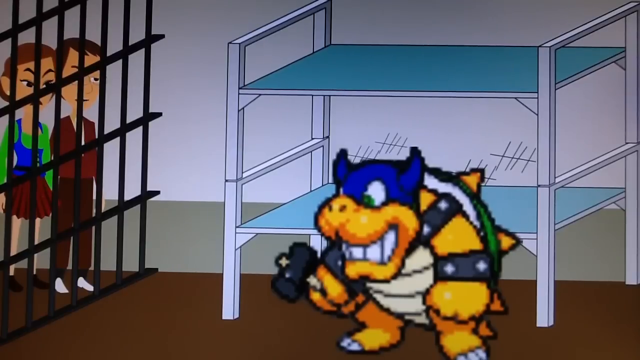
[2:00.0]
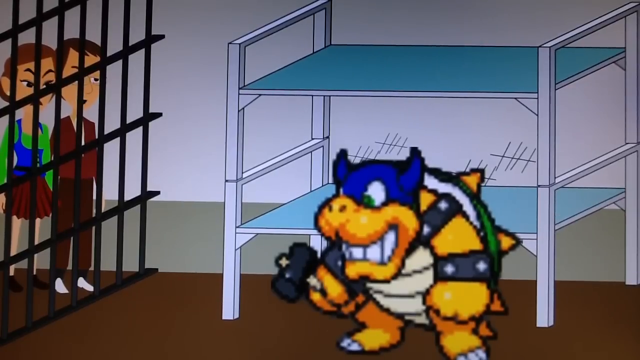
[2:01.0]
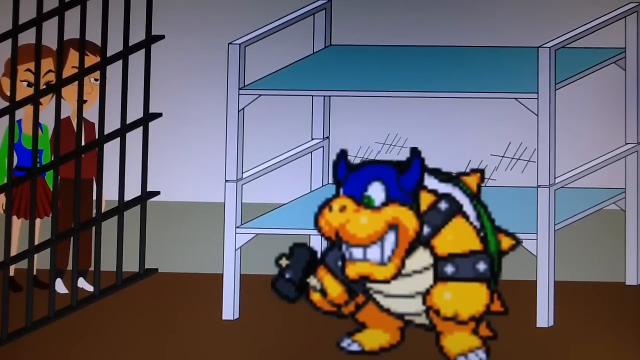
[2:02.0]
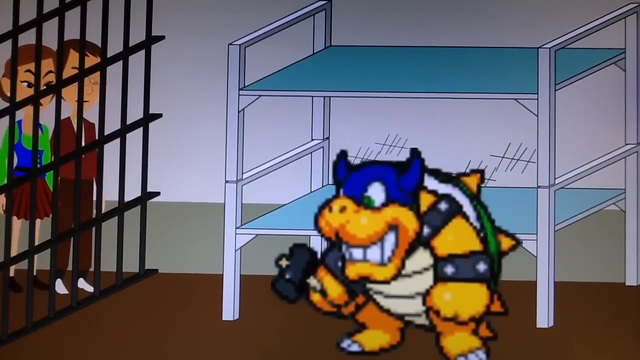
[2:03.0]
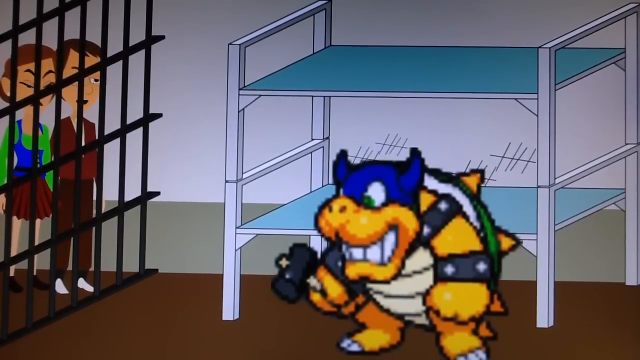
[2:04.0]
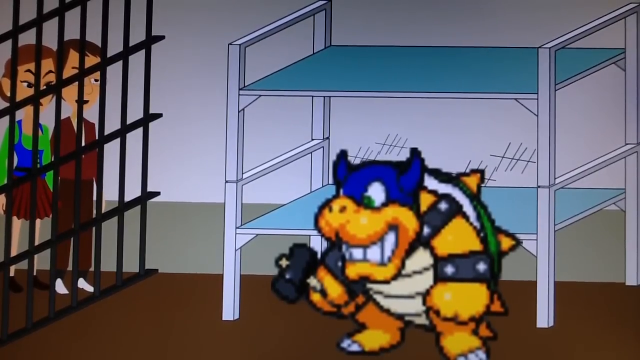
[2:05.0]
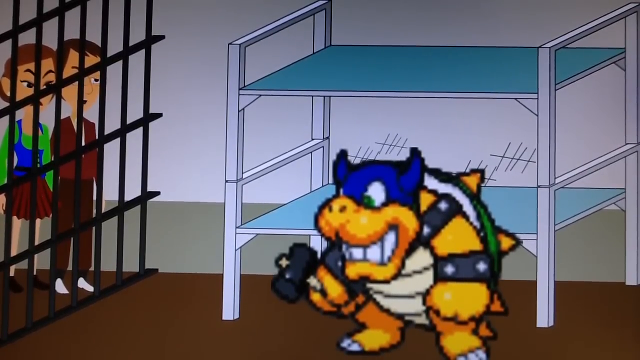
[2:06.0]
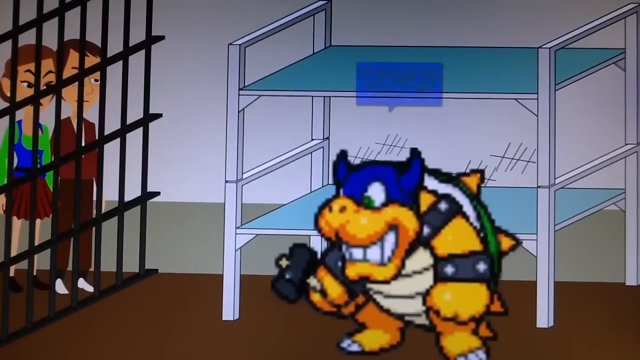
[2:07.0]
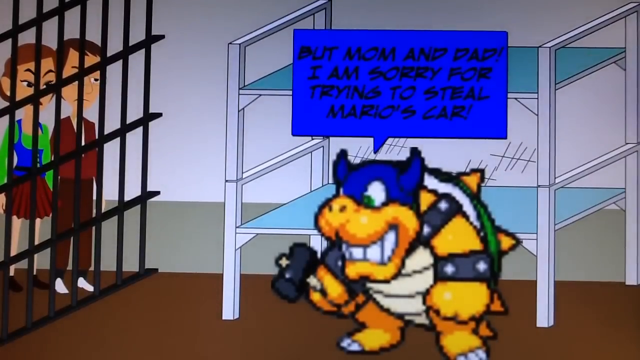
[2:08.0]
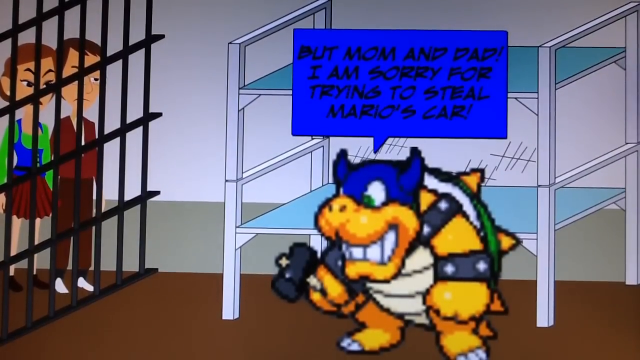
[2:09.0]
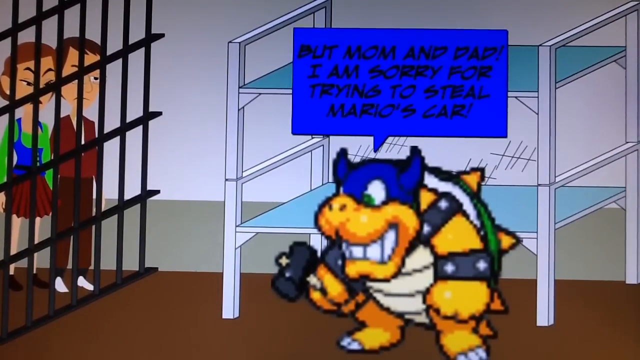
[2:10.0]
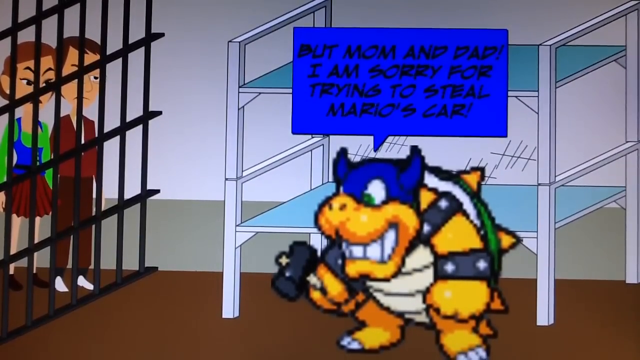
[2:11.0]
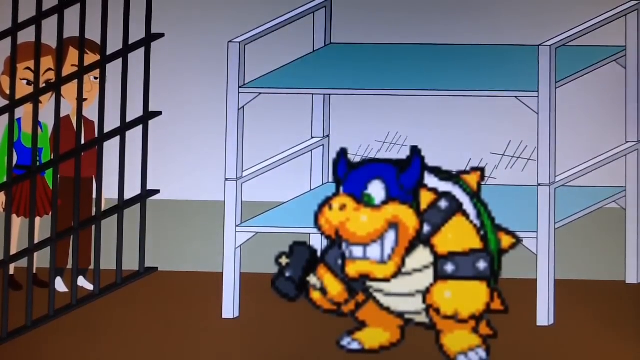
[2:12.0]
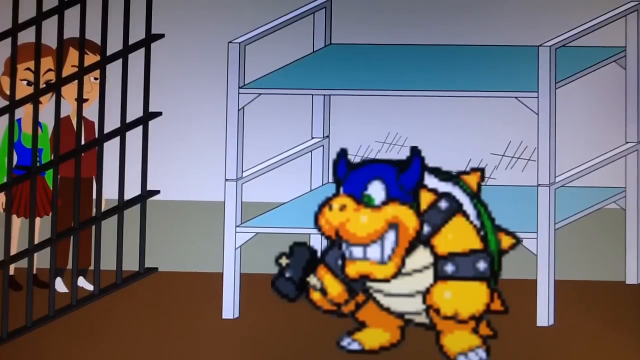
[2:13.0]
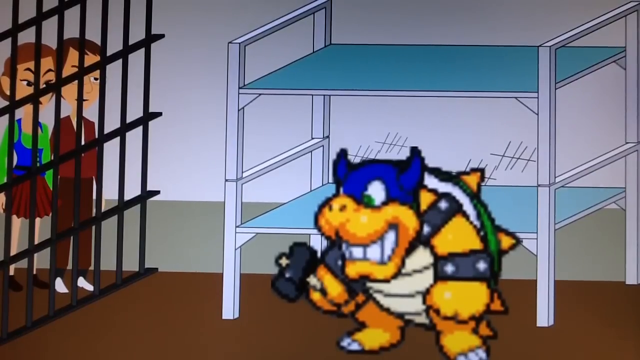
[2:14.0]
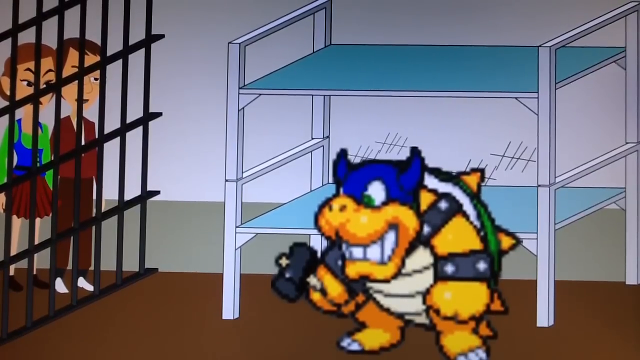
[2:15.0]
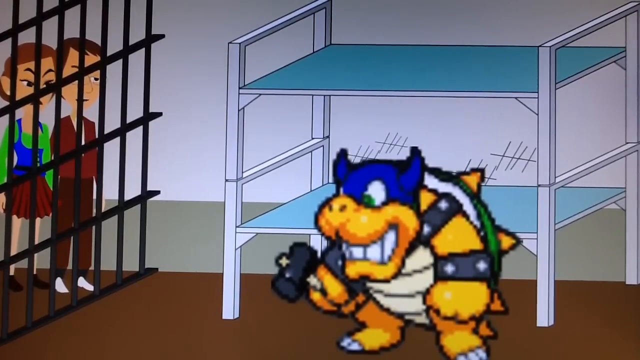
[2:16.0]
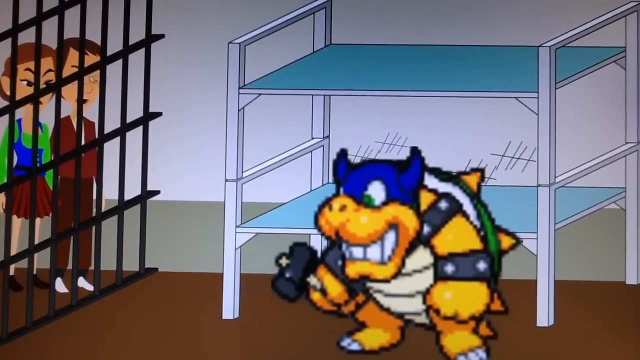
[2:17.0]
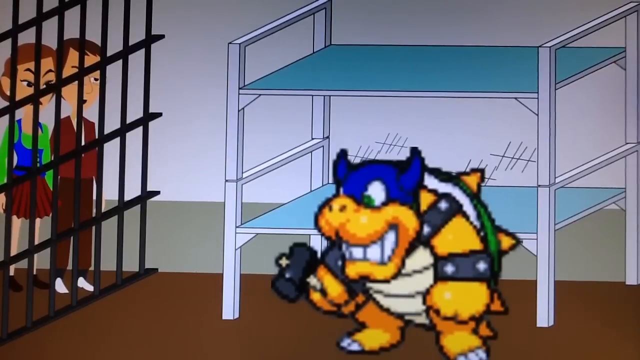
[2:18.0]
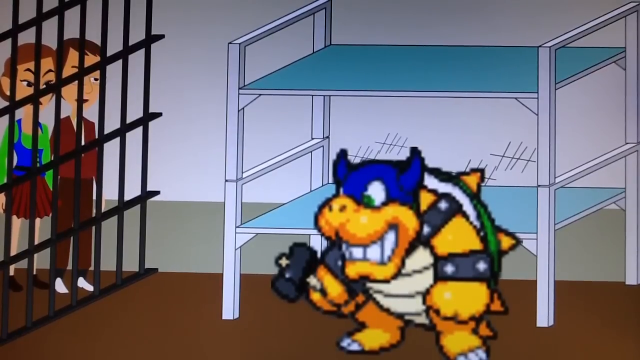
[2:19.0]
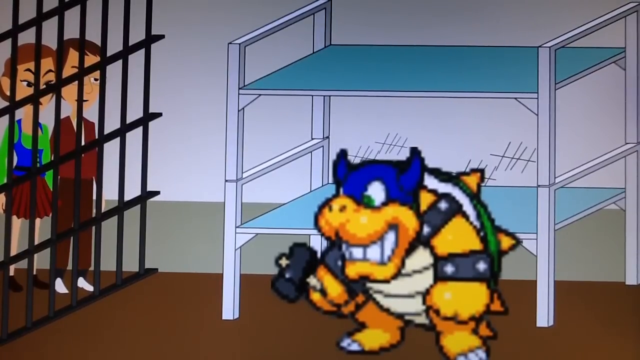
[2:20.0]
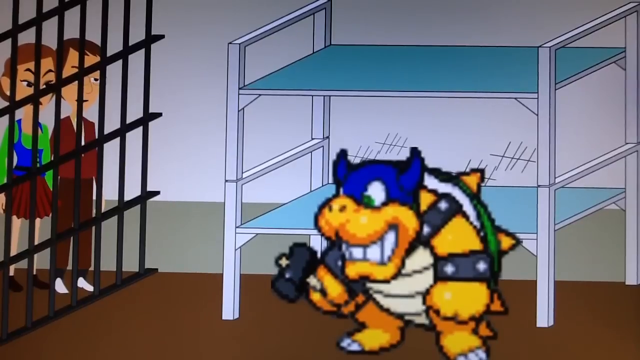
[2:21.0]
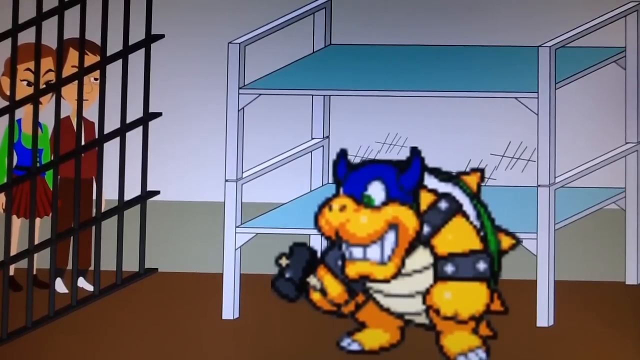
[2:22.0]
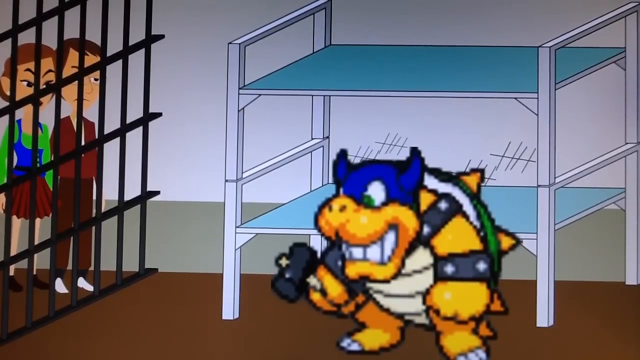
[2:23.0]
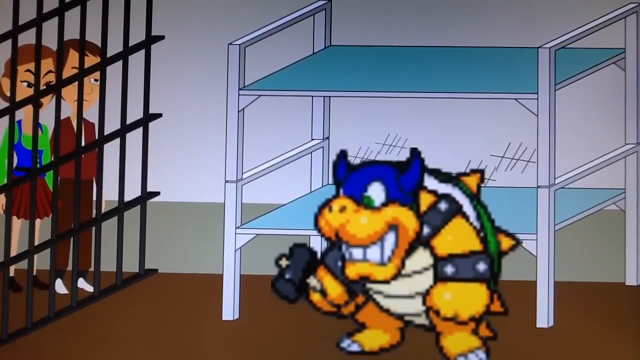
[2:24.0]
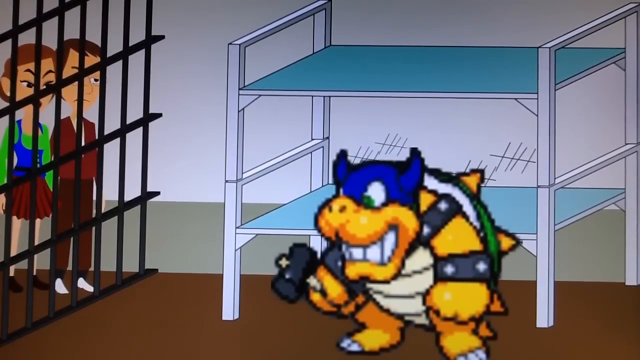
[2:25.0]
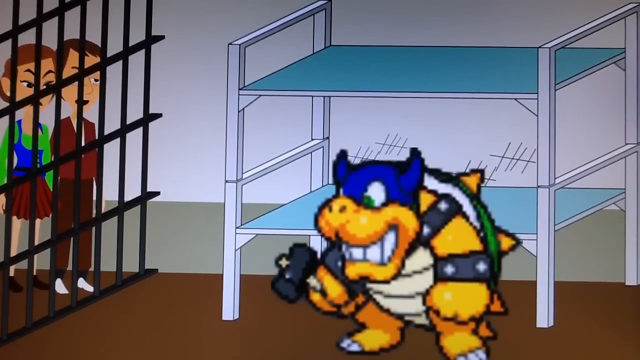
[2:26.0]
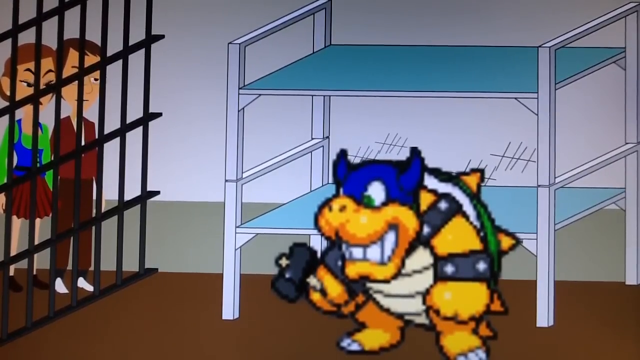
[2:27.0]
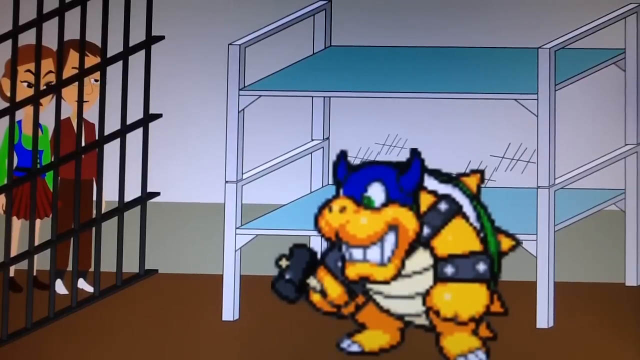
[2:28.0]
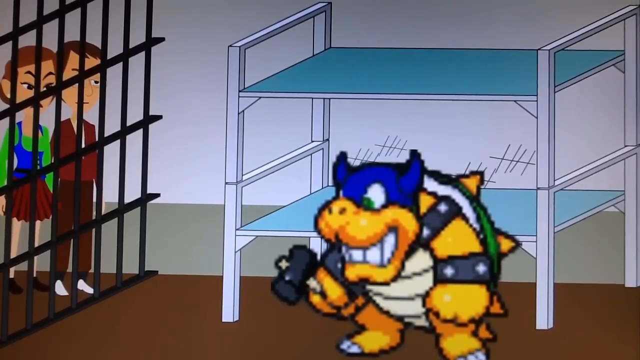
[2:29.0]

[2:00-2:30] Two Caucasian characters stand outside the cell. The one on the right looks like a male, wearing brown slacks, what are apparently white shoes although they look like socks, a brown sweater or jacket with a white shirt underneath, and short brown hair. Both have the same expression, looking kind of tired or over it. The female character on the left wears a brown miniskirt, brown footwear, a long-sleeve green blouse and a blue vest; her brown hair looks kind of pulled back and up. They stand outside the gate to see Rookie. A blue square call-out appears over Rookie that says, "But mom and dad, I'm sorry for trying to steal Mario's car," indicating that the two characters are Rookie's parents. Their mouths move as they talk, but they have no call-out boxes.